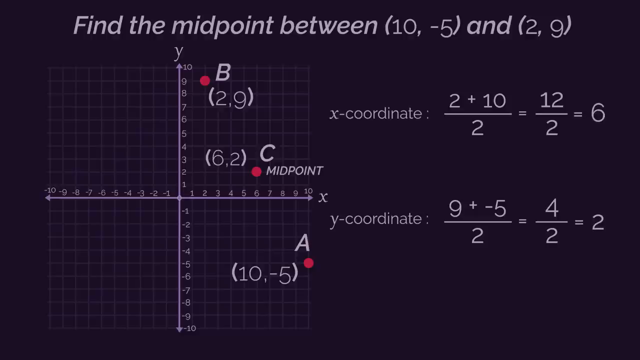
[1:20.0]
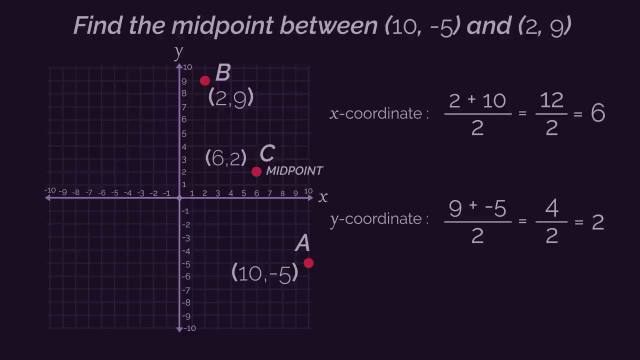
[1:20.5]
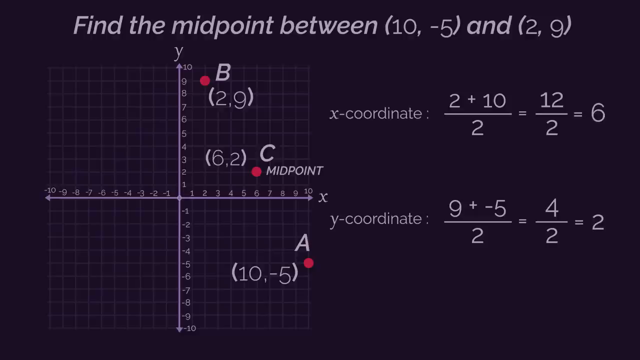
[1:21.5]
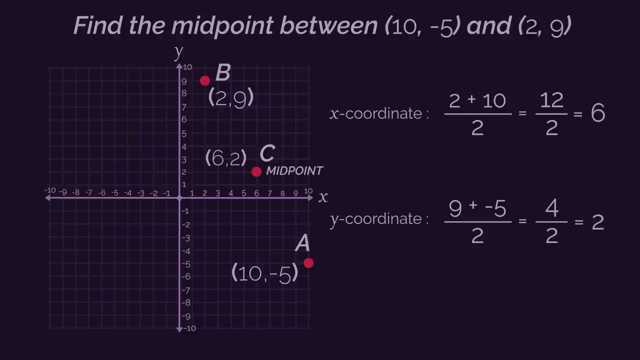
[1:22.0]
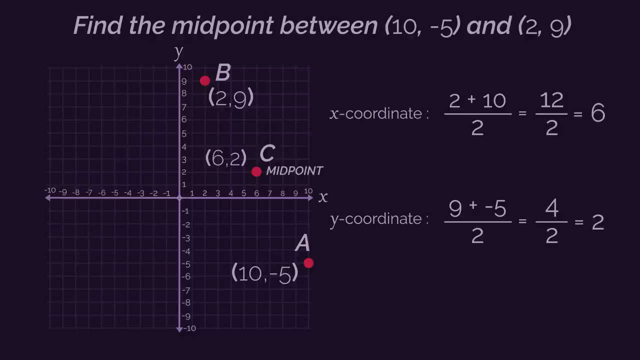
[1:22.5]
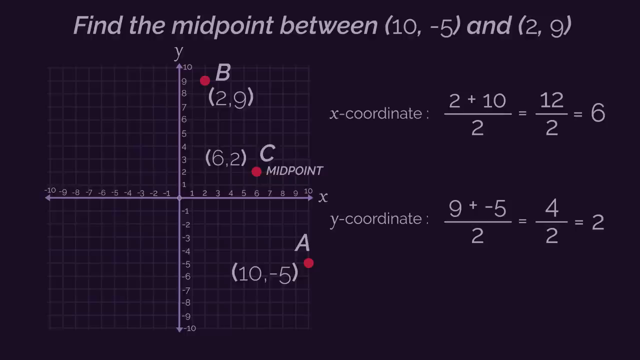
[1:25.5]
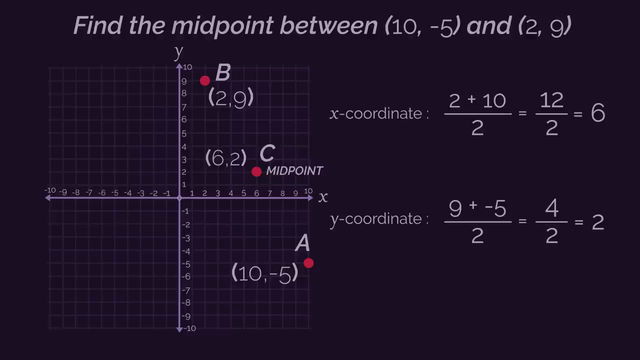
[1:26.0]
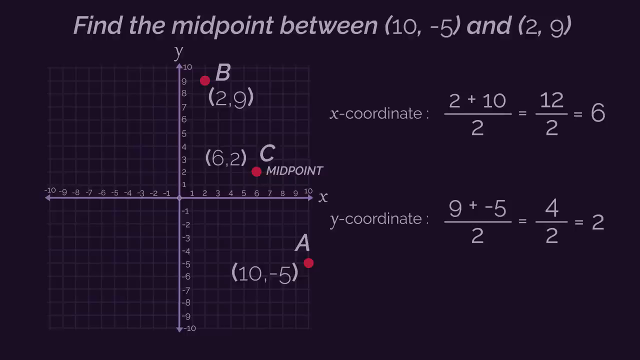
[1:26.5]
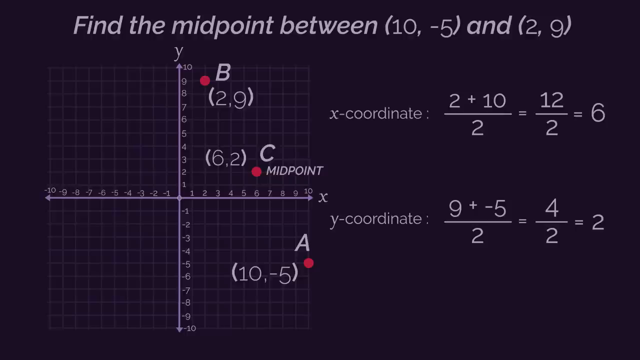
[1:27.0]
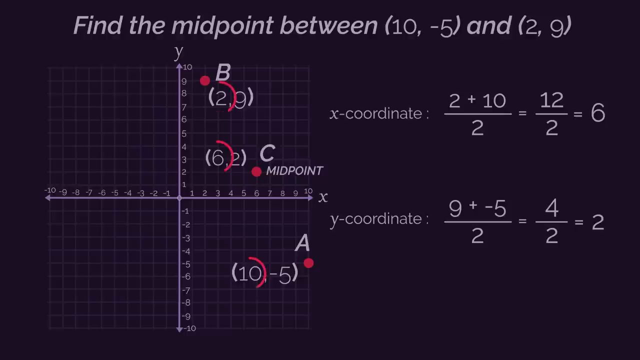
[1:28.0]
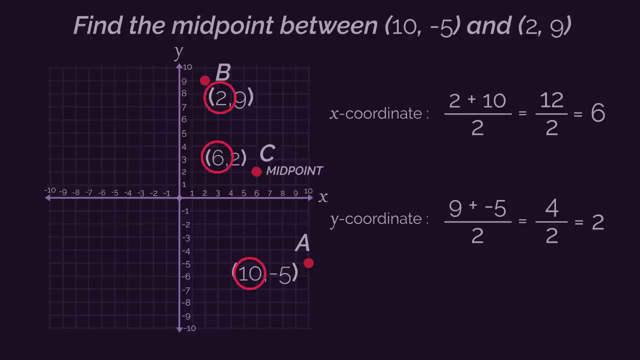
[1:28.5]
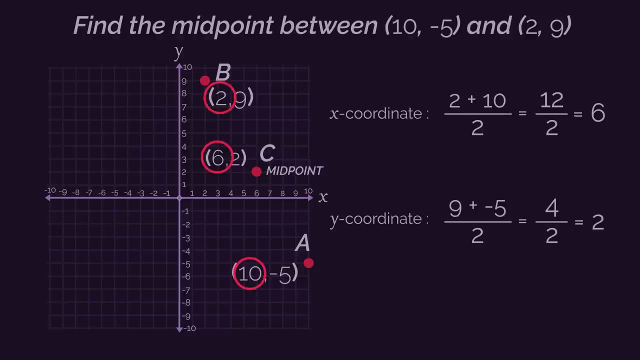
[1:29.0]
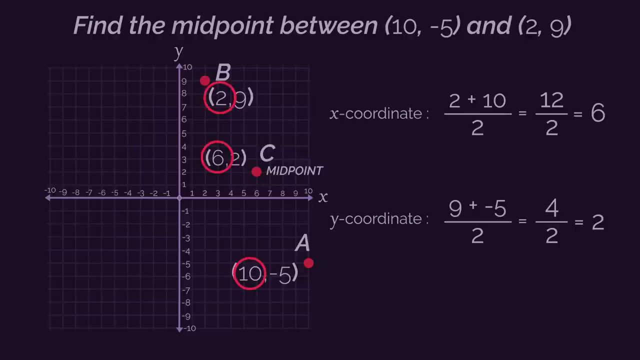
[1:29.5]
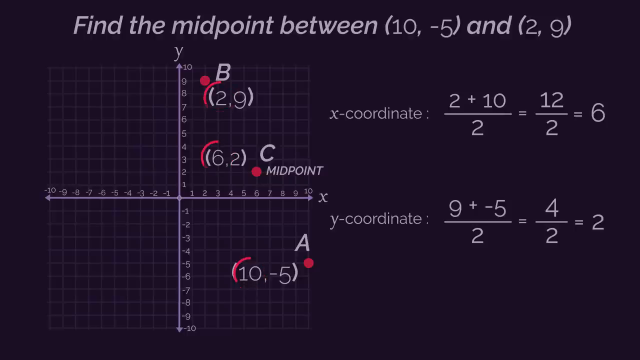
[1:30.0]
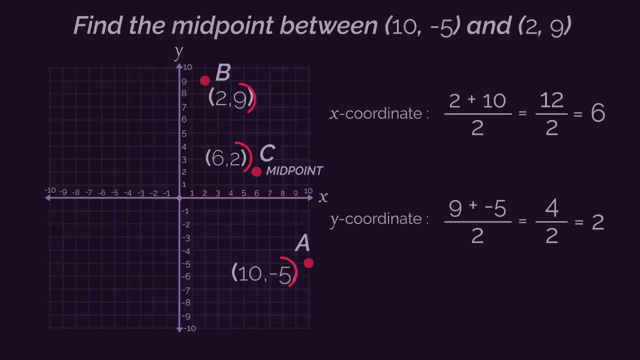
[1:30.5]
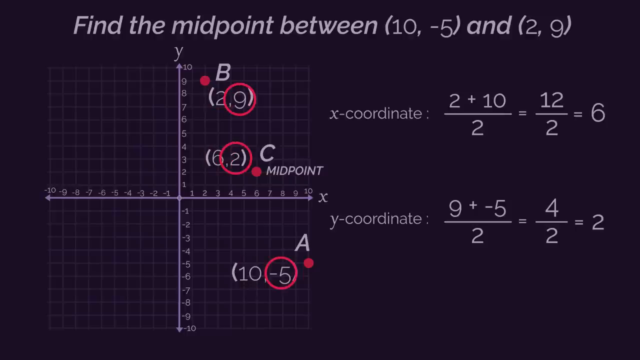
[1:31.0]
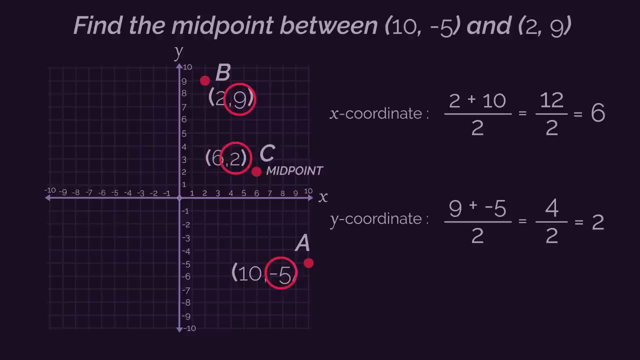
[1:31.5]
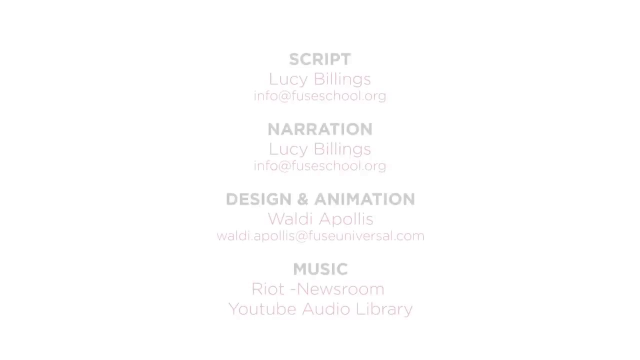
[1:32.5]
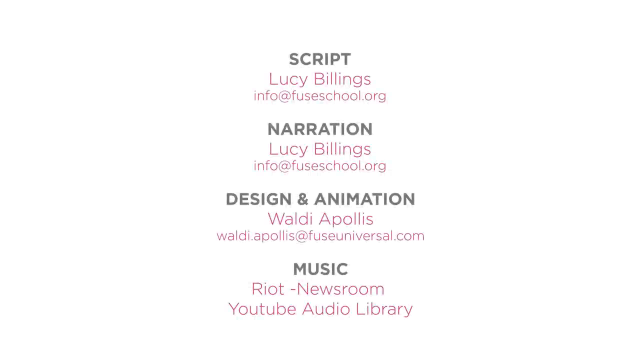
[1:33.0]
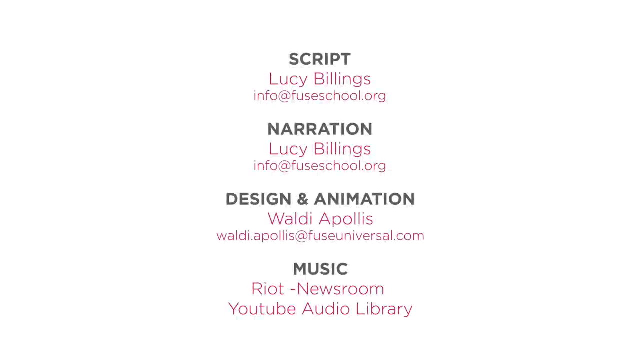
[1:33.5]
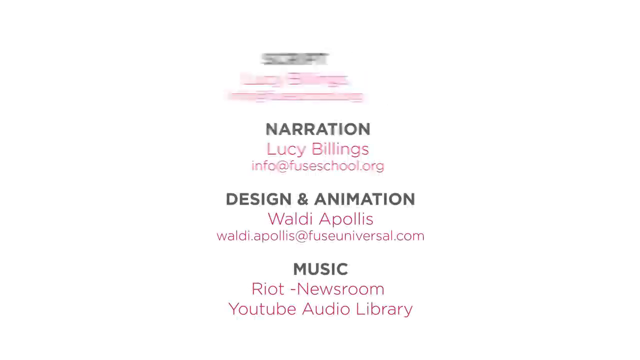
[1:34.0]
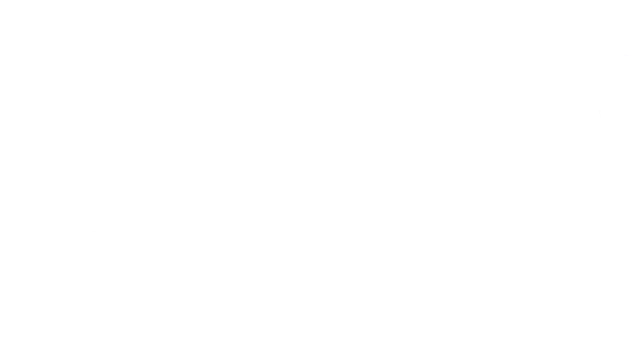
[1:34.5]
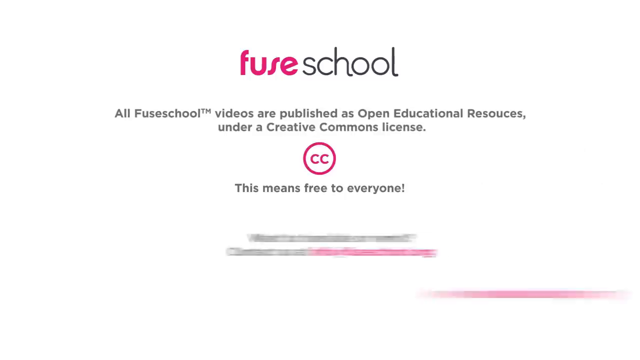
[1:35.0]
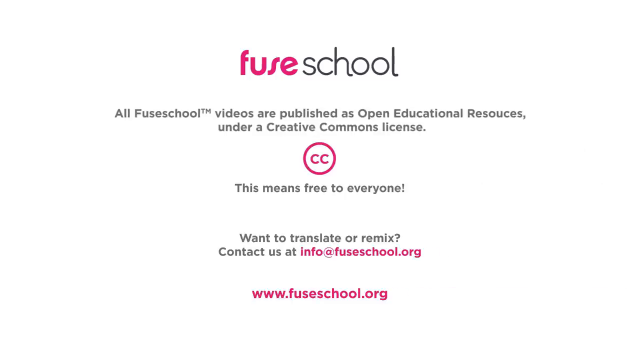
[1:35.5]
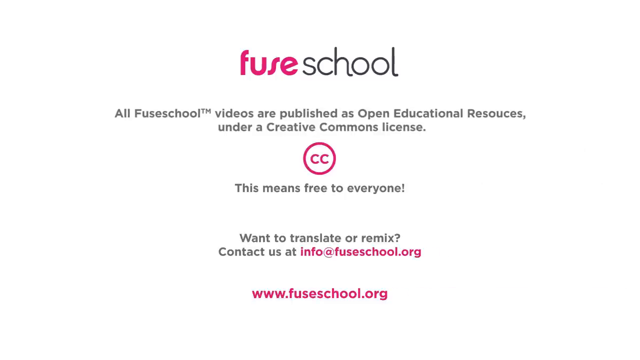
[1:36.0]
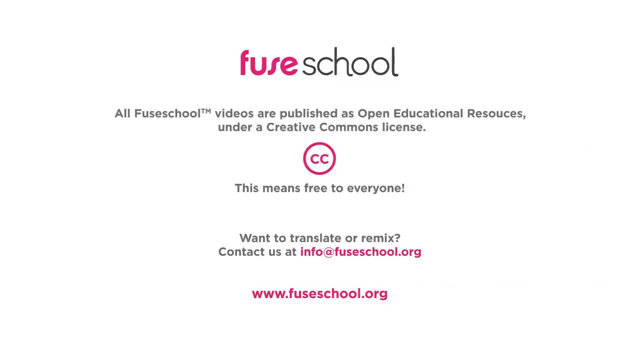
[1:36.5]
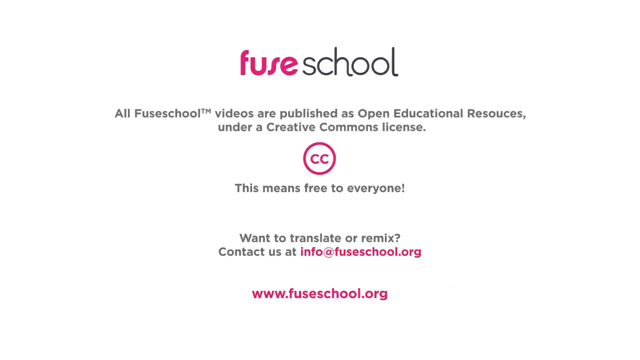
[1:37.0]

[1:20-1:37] With the points plotted and the midpoint found, the math is on the right, all still in white font on a black background. The first number of each point, 2, 6 and 10, is circled in red, and then the second number of each point, 9, 2 and negative 5, is circled in red. The video then moves to an all-white page with credits running. Each title is in black all caps: script, narration, design and animation, and music. Under each title is a person's name in red, such as Lucy Billings under script, with the email address info@FuseSchool.org under most of them. YouTube is credited under music. At the very end, a credit for Fuse School lists some information about them, such as how to contact them by email, with the website listed at the bottom.